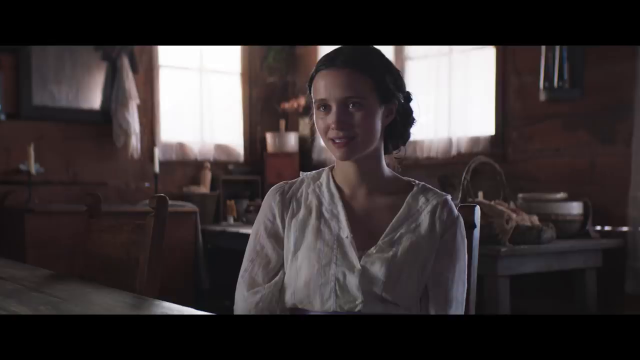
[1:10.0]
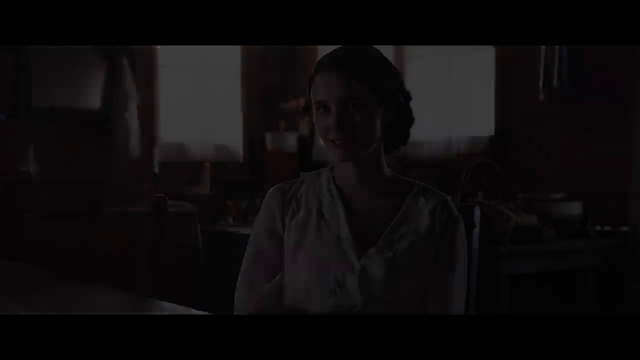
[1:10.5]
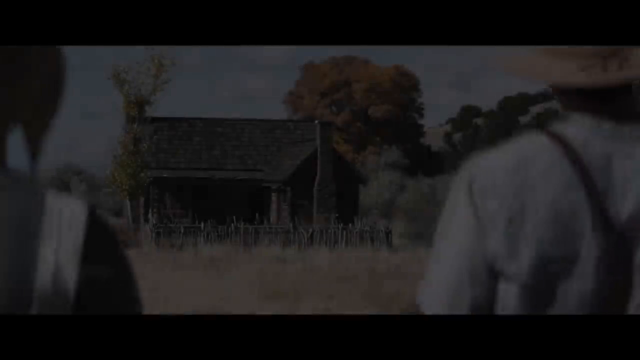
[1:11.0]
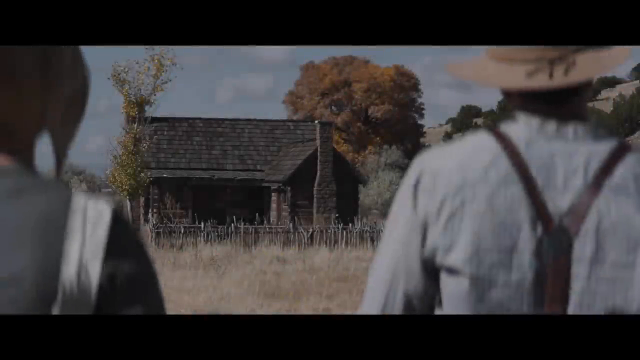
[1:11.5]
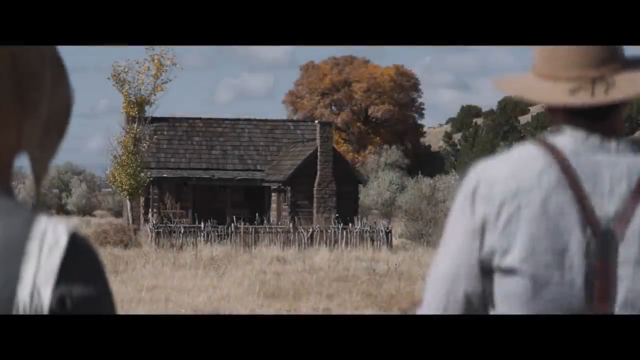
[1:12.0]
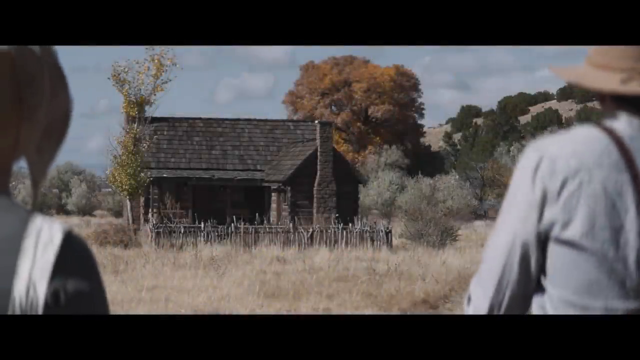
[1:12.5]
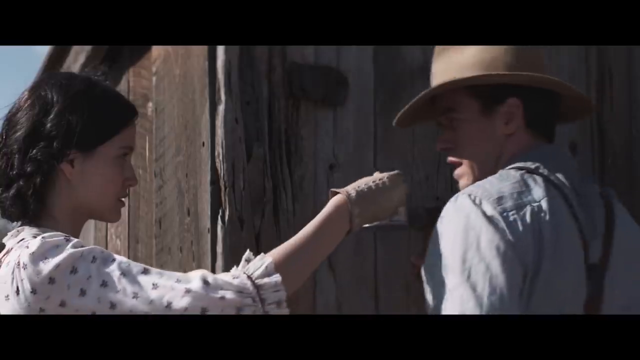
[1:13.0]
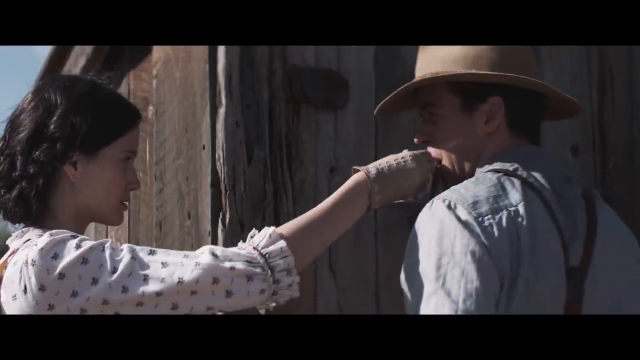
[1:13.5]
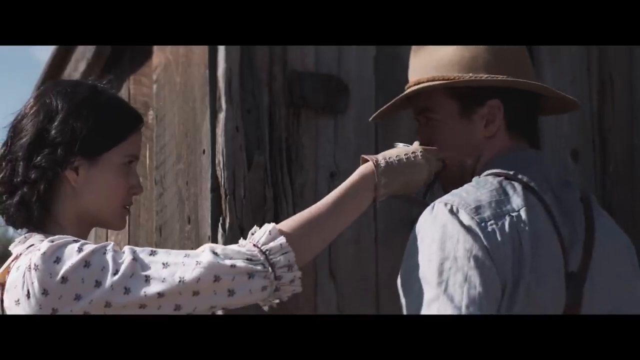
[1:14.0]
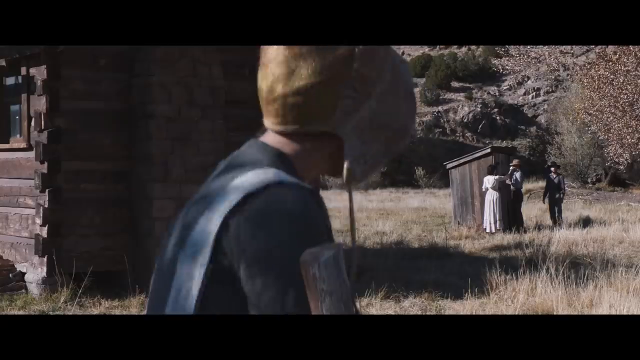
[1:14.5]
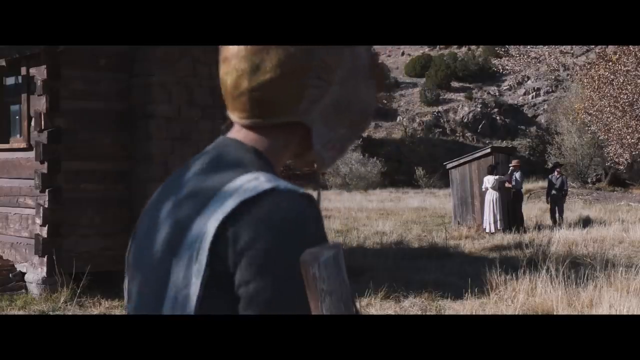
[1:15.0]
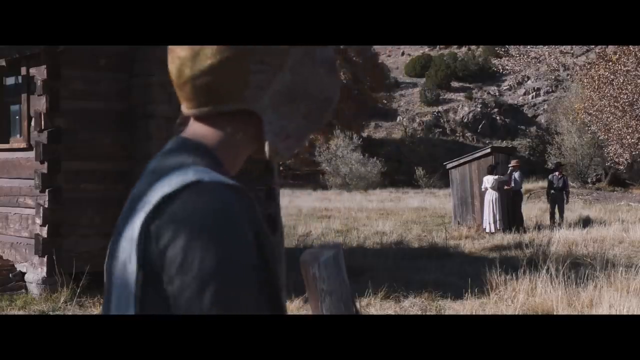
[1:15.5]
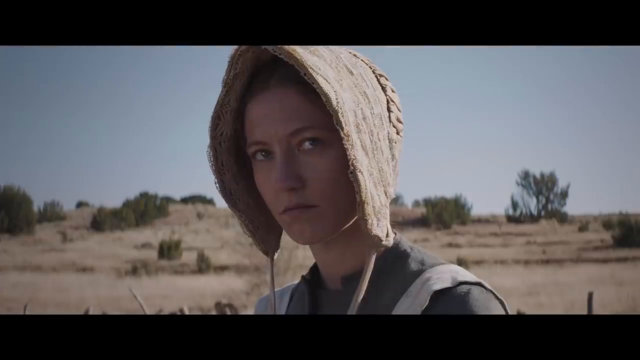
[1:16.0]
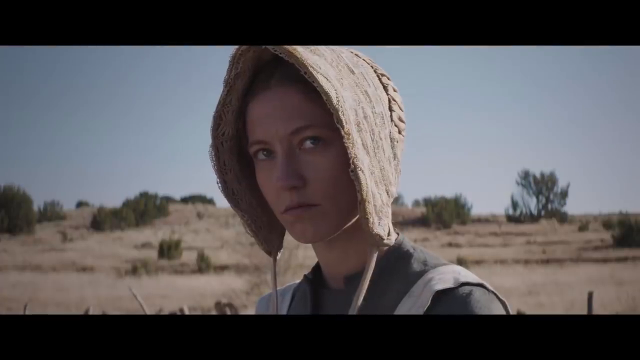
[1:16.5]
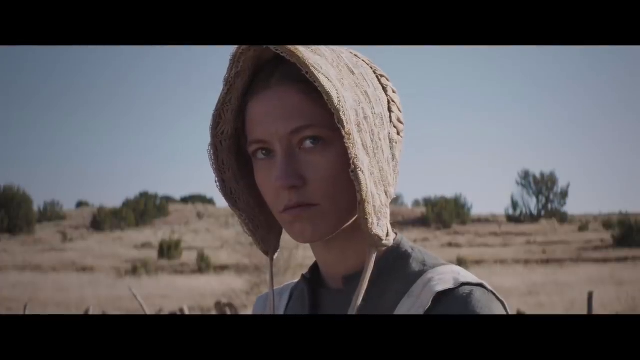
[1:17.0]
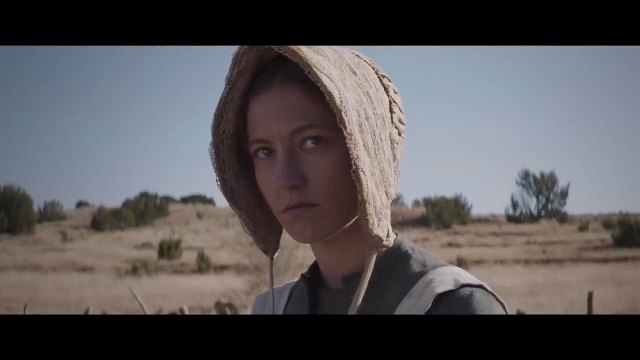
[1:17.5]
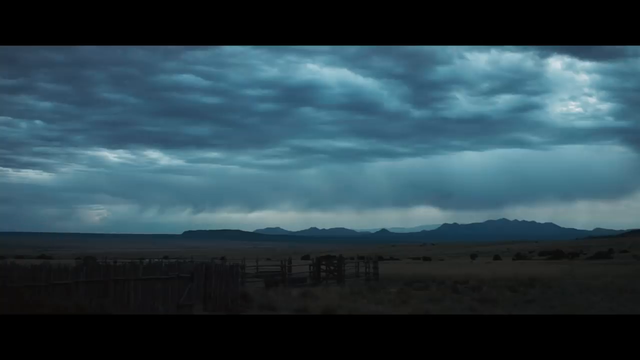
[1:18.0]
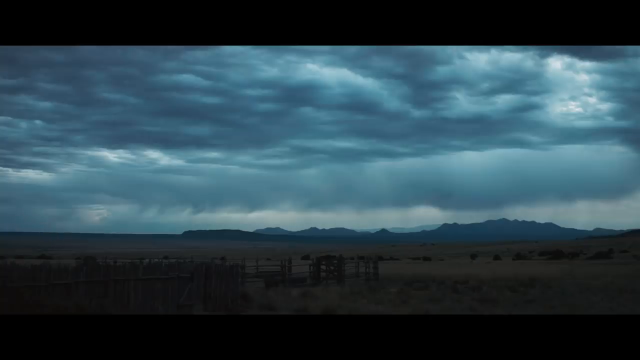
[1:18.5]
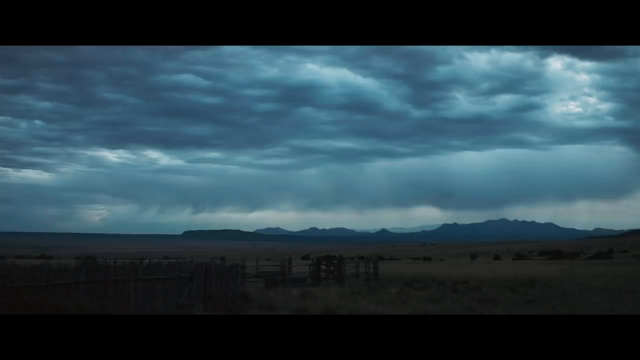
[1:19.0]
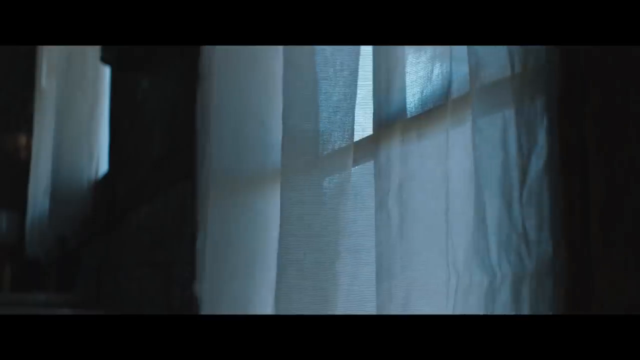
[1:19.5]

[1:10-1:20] A woman and a man, though it is unclear whether it is the lighter-haired or darker-haired woman, walk toward the barnyard. The shot cuts to the darker-haired woman, her hair in a fancy braided updo, wearing what looks like a floral frock. She raises her hand, apparently to feed the man, who wears a cowboy hat, suspenders and a blue shirt. In the background, possibly the lighter-haired woman, in a bonnet and a blue dress, is maybe getting wood or water while looking at the couple's romantic gesture. Next comes the land with the wood fence in the foreground and mountains in the background under a dark, stormy, grayer sky; it does not look like it is raining. The shot then changes to the darker-haired woman sitting.